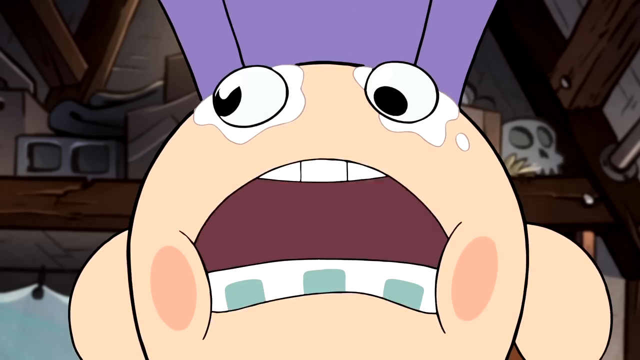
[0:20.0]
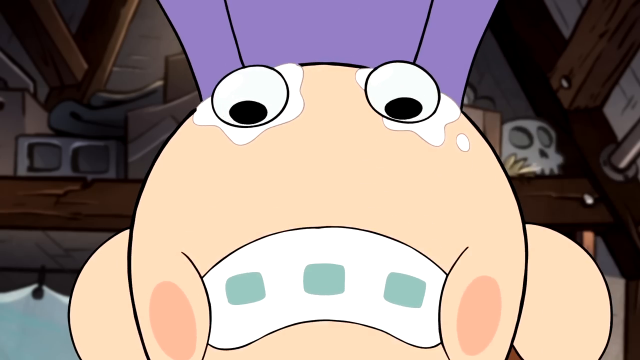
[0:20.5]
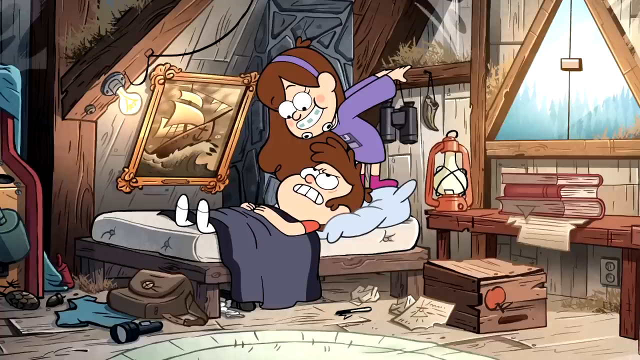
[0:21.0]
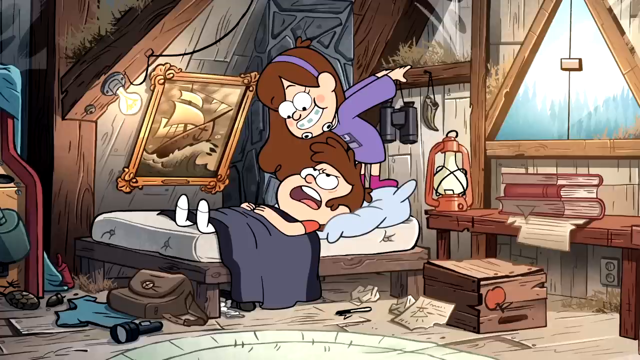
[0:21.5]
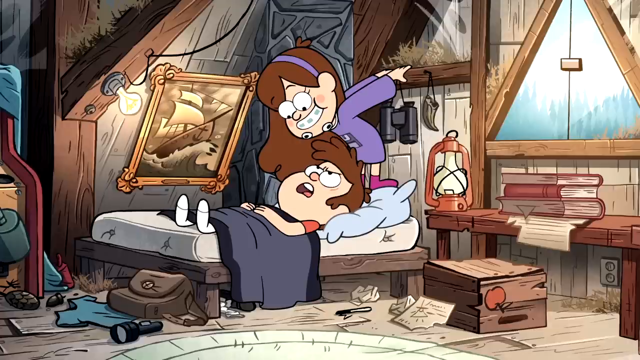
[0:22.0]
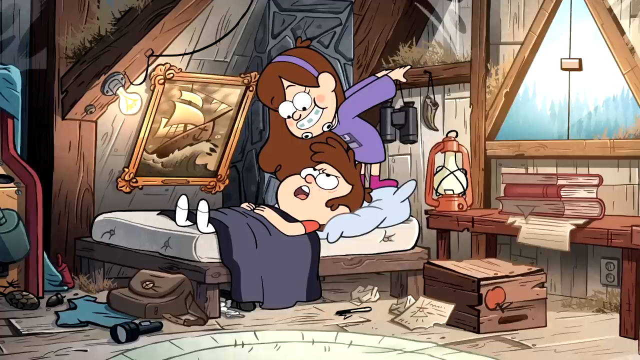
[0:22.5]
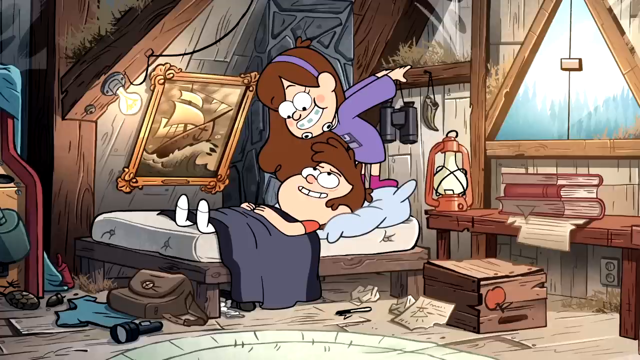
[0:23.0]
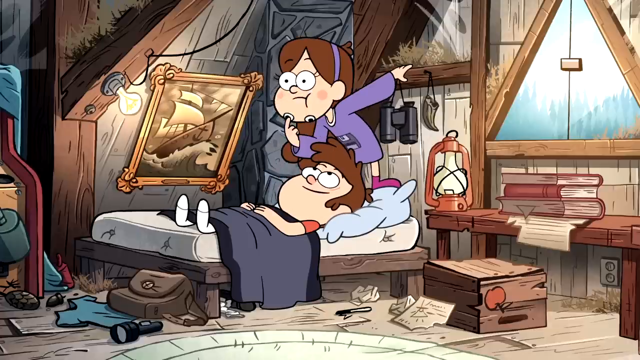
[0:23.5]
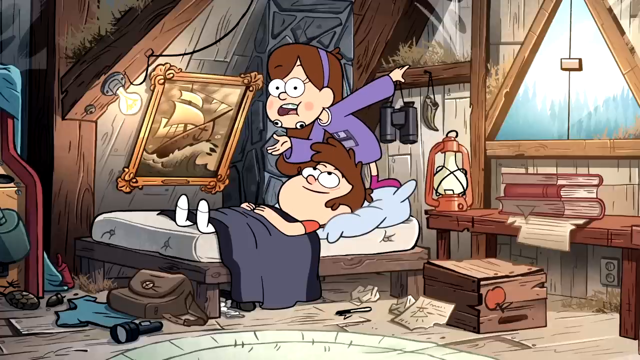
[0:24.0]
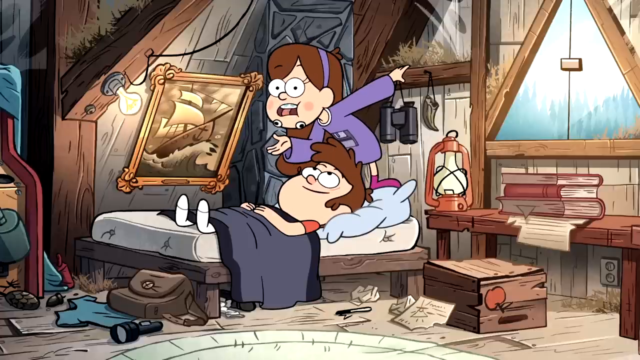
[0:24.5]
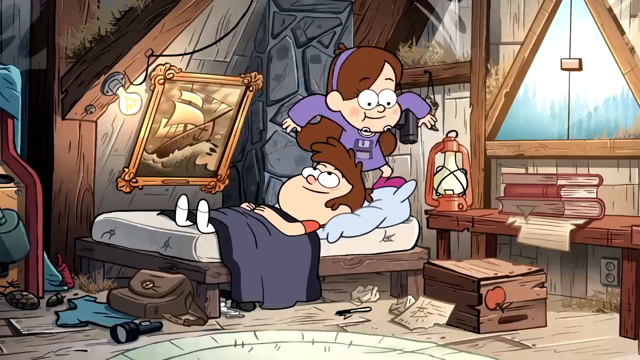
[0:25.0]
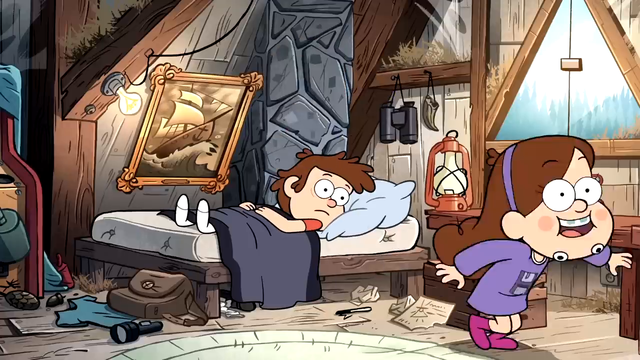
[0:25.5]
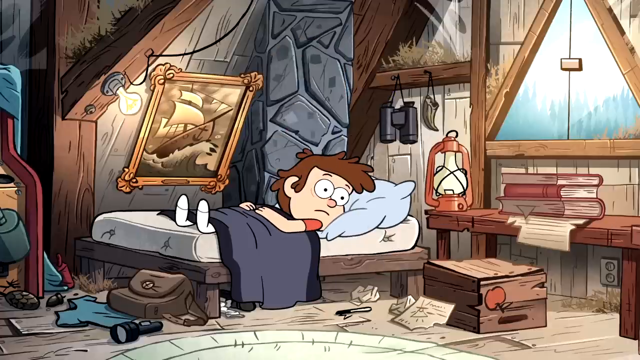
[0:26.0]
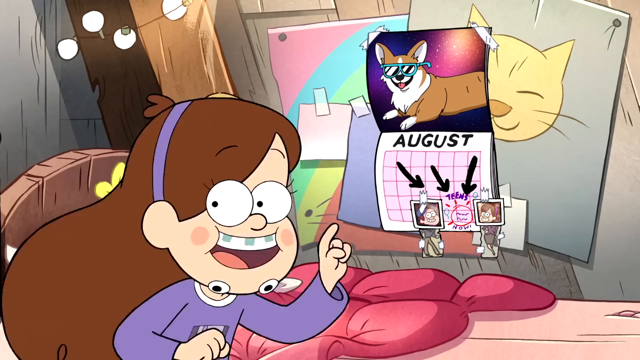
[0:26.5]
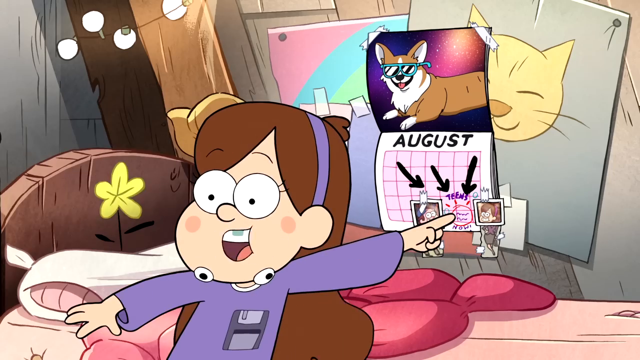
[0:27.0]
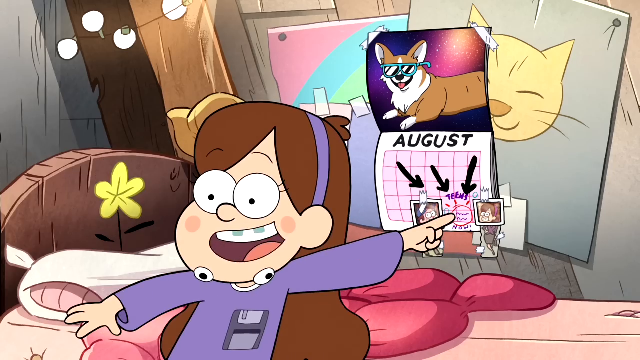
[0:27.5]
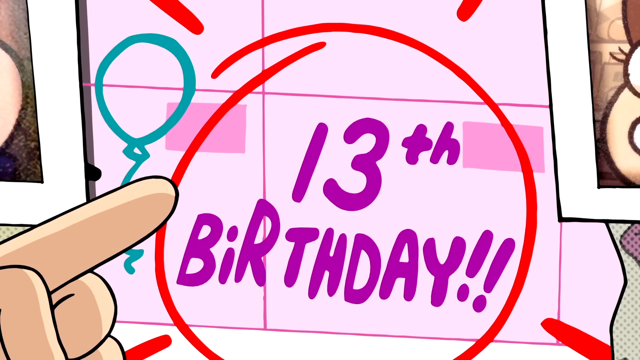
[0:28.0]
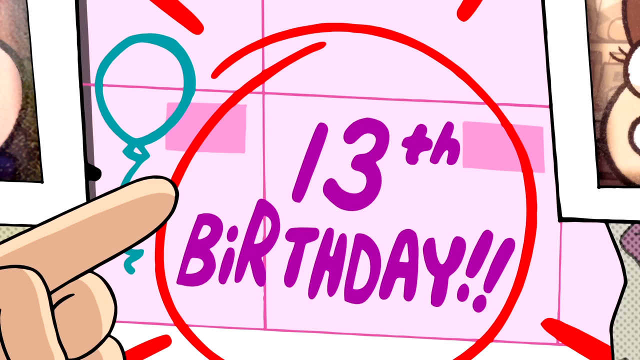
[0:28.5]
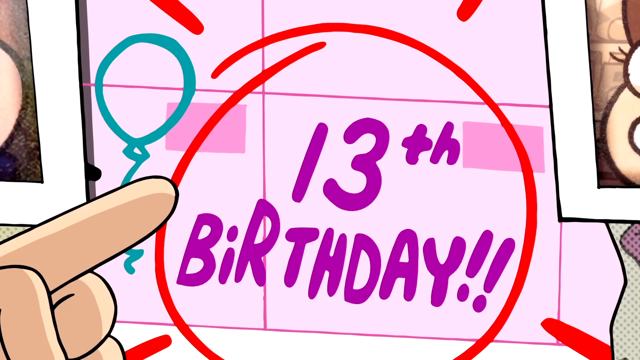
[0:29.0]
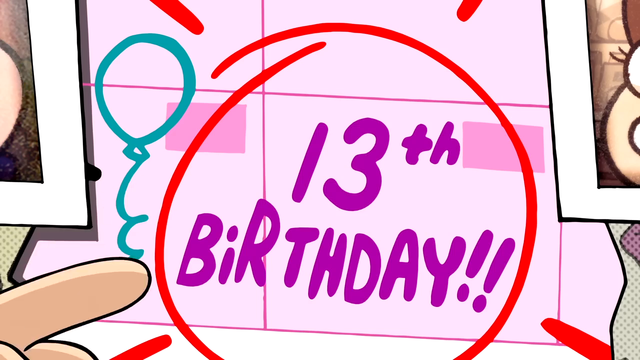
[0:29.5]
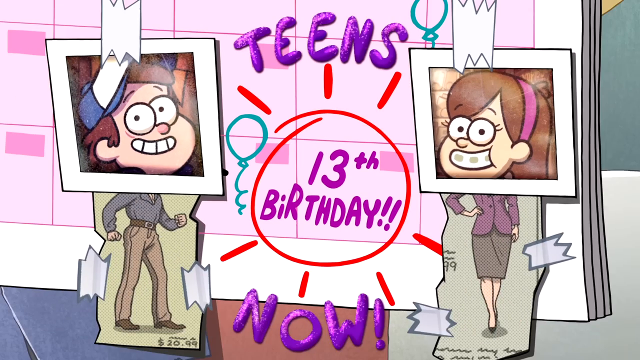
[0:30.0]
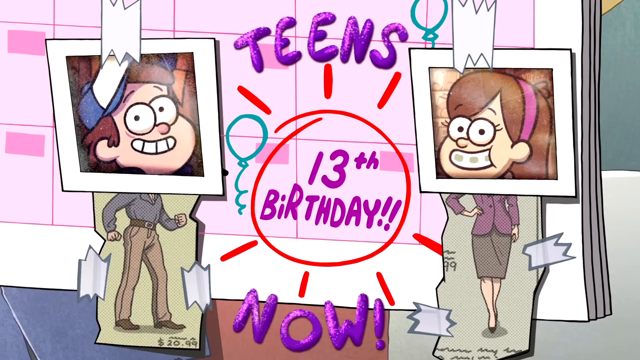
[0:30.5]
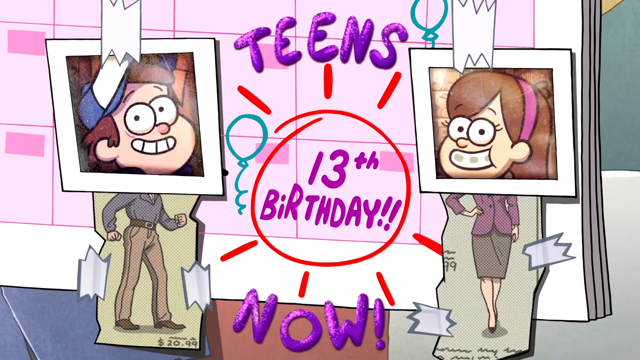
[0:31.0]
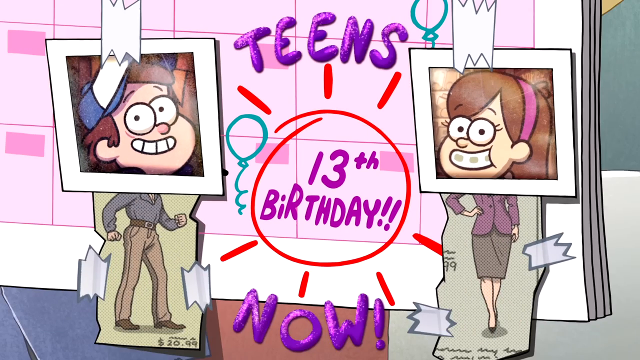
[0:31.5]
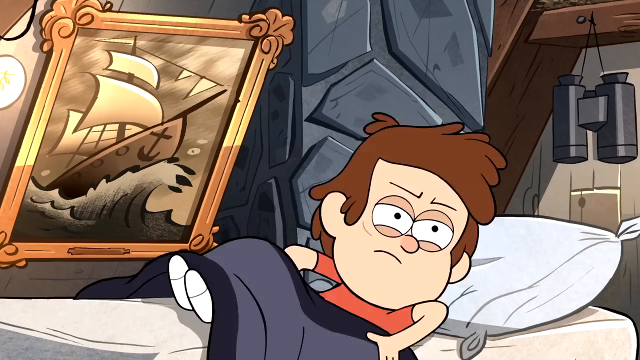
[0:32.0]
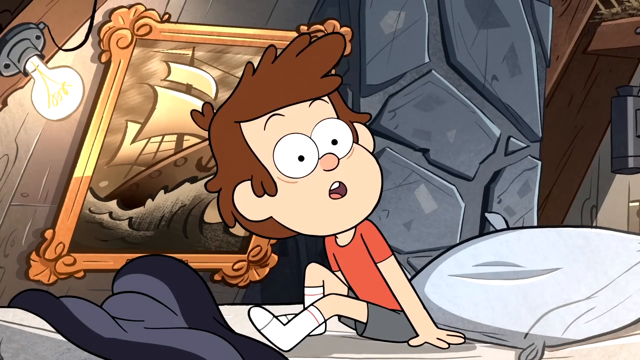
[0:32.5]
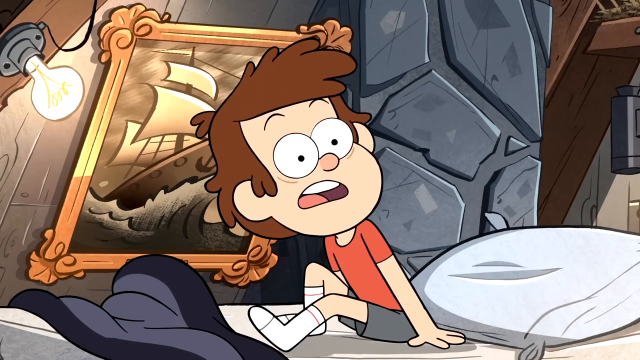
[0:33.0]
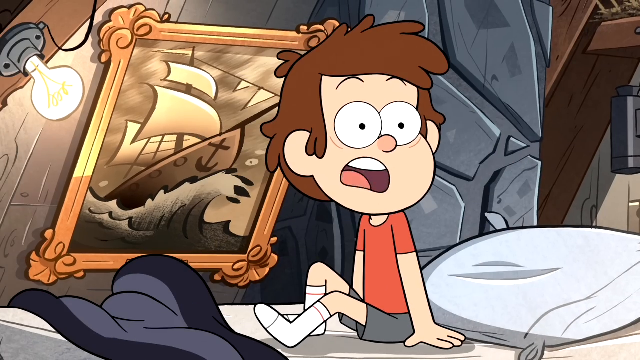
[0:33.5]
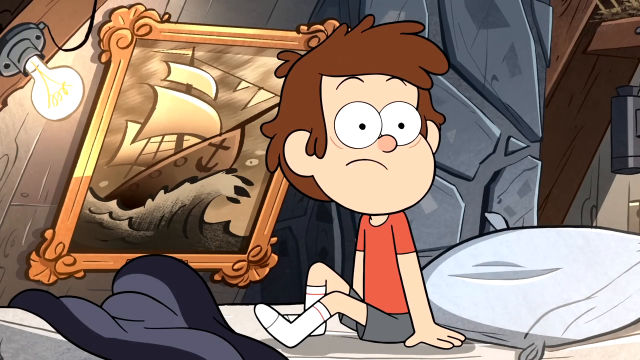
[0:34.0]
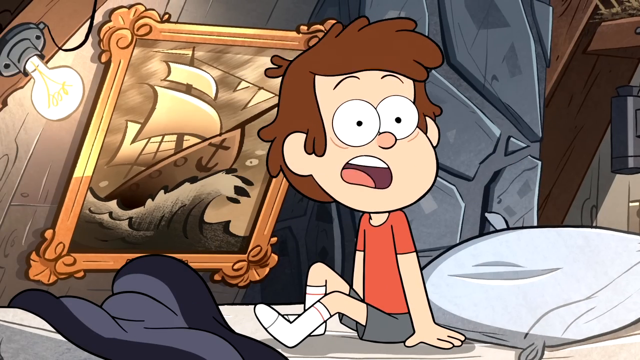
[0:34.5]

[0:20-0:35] A close-up shows the girl leaning over the boy in bed, her braces visible. A wider shot from a distance shows her standing on top of his pillow on the bed, leaning over him and smiling very happily, showing her braces, with her hands towards the bed post on the wall. The boy looks very angry and irritable as he talks to her while she keeps smiling. She puts her hand on her chin, kind of in confusion, then puts her hand out, seeming to grimace slightly as she talks. She jumps off the bed in a hurry and runs out of the scene while he looks towards her. She points at a calendar on the wall showing a dog wearing sunglasses; the month is August, and three black arrows point to some things on the calendar. She points to a small pink circle while she keeps talking. A zoomed-in view shows "13th birthday" and purple text that says "teens now," with two pictures of the two characters on the calendar. The boy lies in bed with his hands on the grey blanket, looking over towards her, then quickly jumps up to sit on the bed, looking over at her.